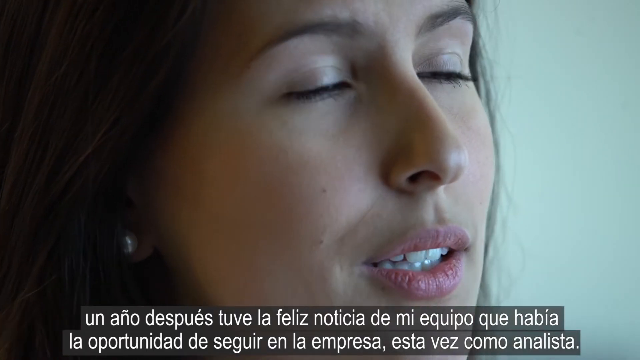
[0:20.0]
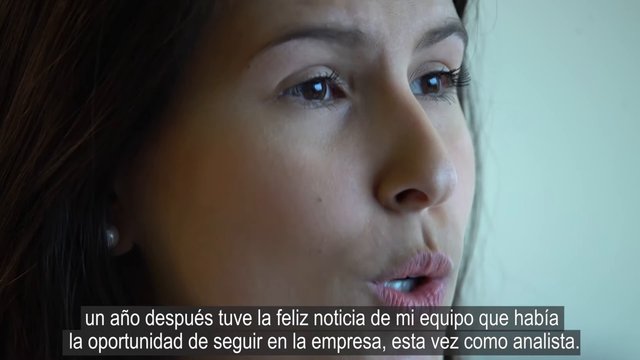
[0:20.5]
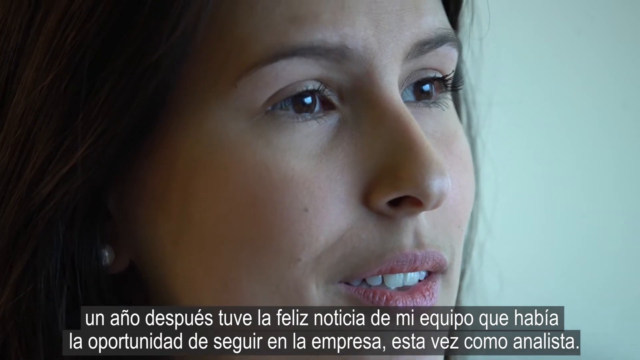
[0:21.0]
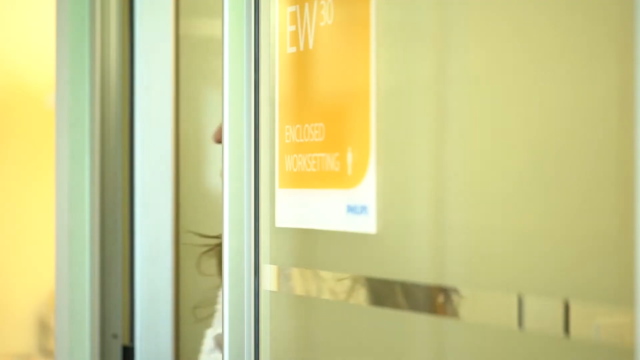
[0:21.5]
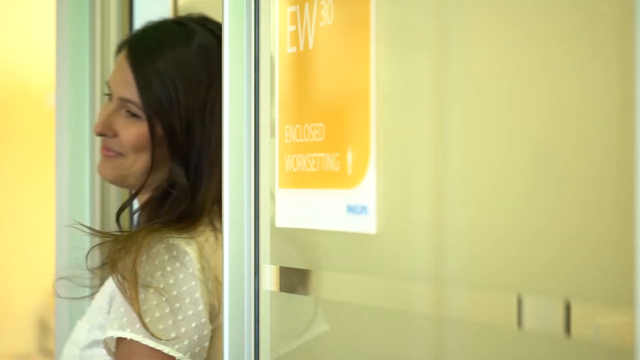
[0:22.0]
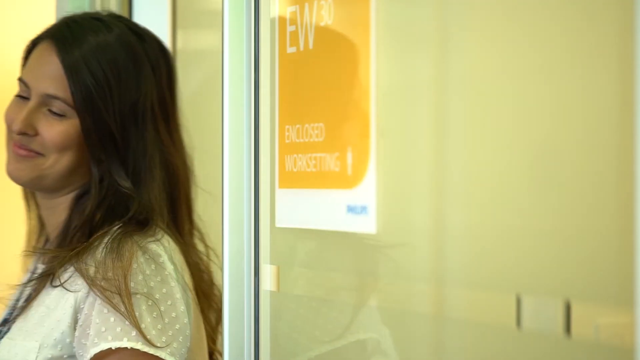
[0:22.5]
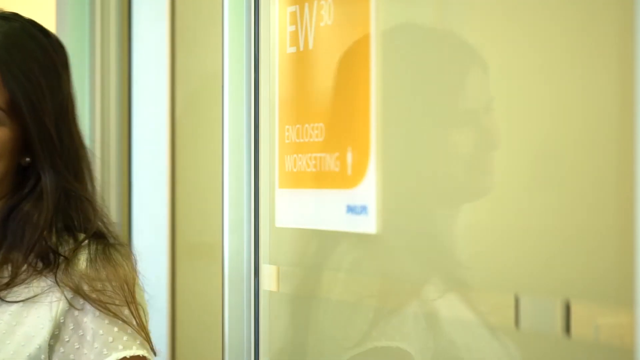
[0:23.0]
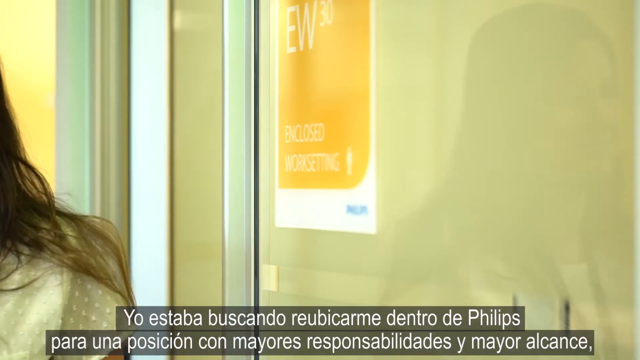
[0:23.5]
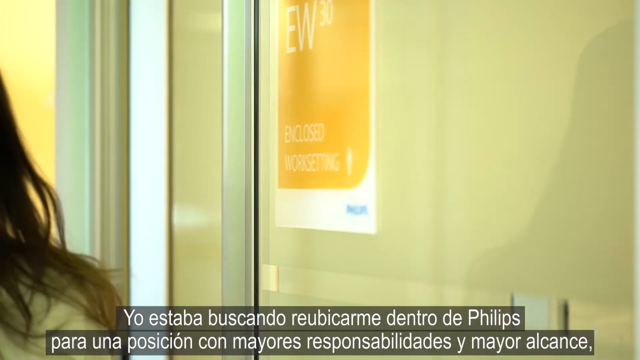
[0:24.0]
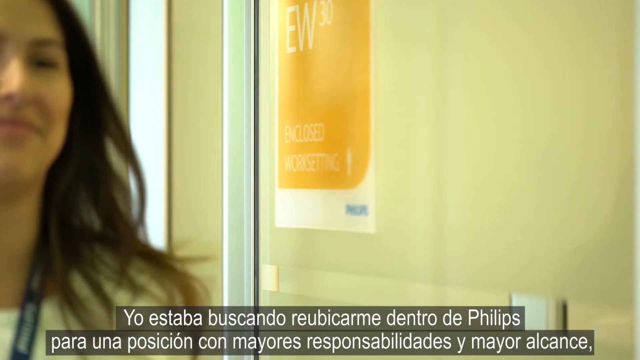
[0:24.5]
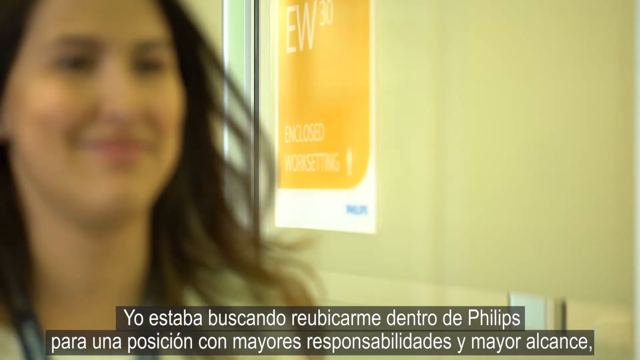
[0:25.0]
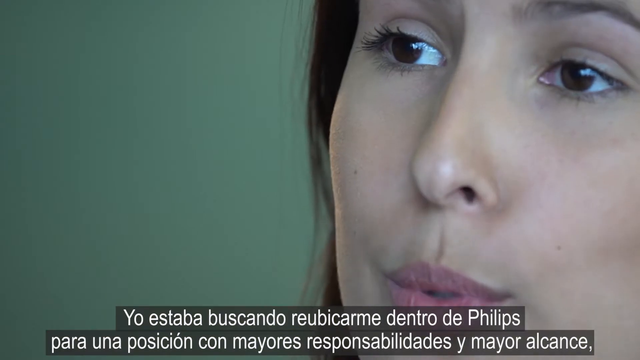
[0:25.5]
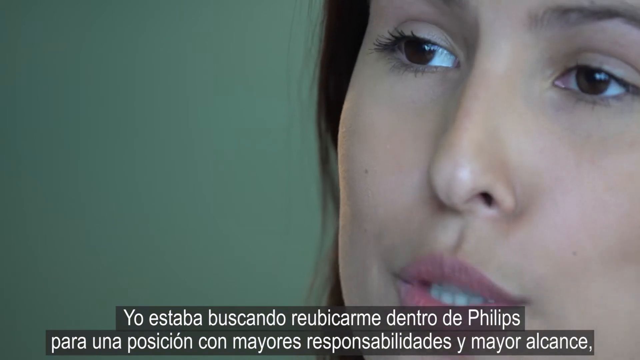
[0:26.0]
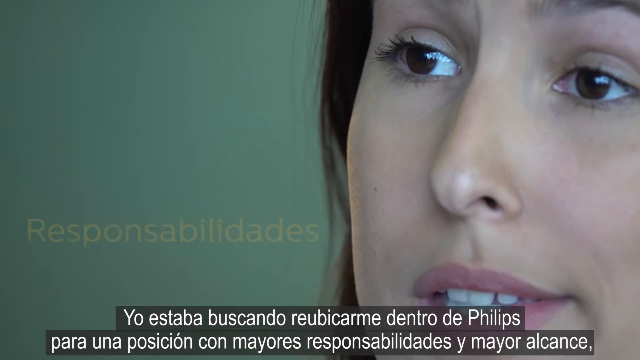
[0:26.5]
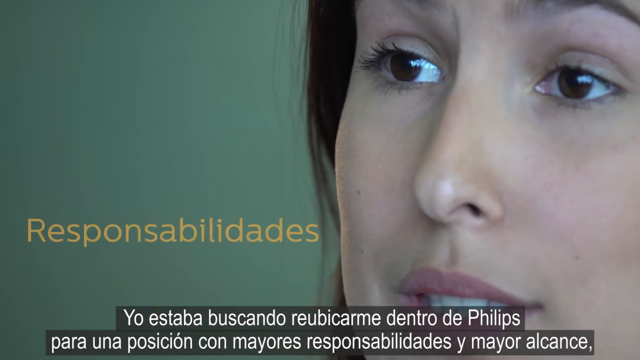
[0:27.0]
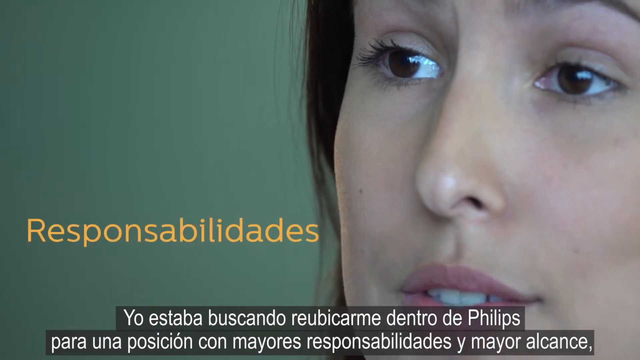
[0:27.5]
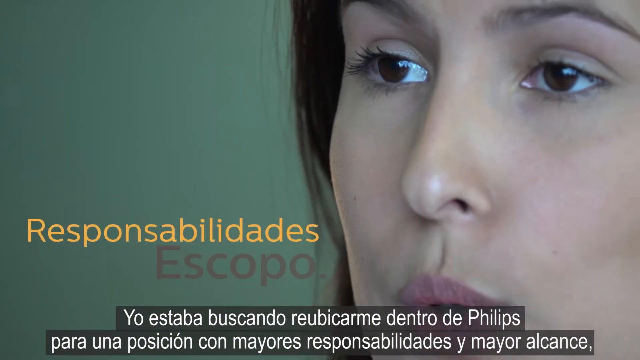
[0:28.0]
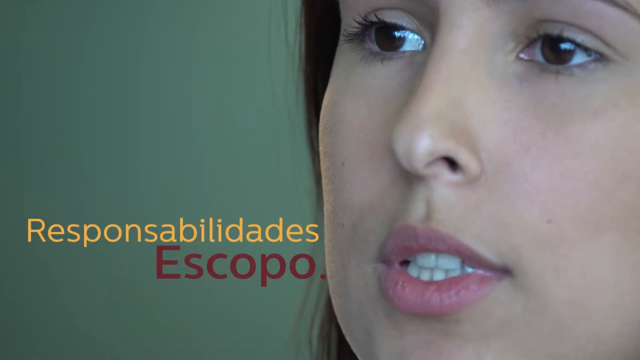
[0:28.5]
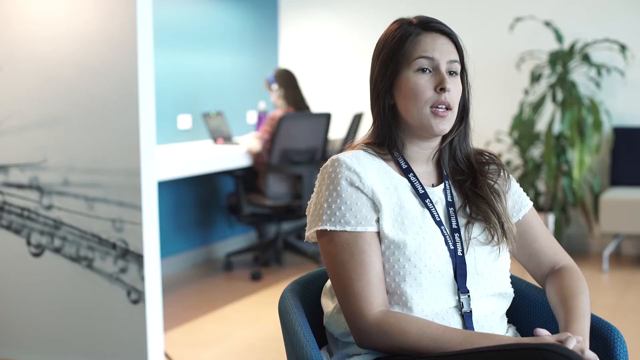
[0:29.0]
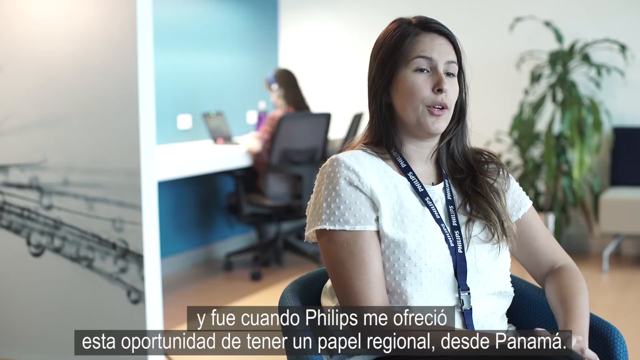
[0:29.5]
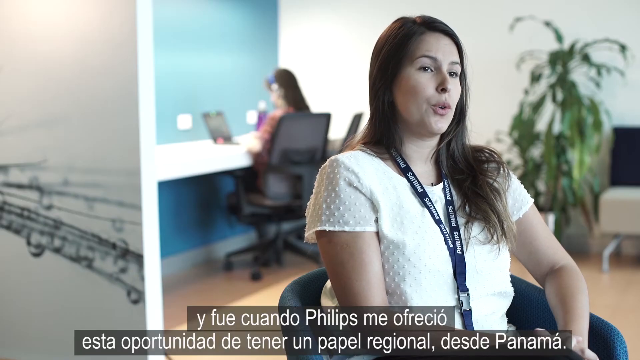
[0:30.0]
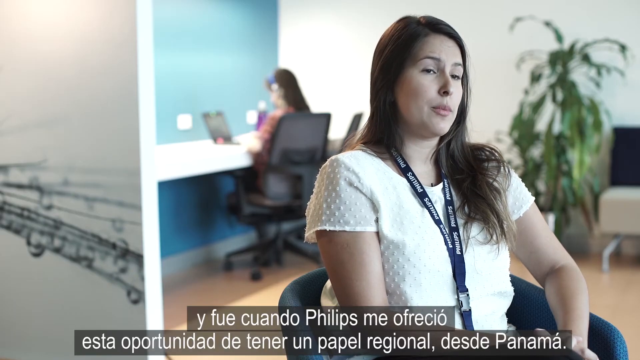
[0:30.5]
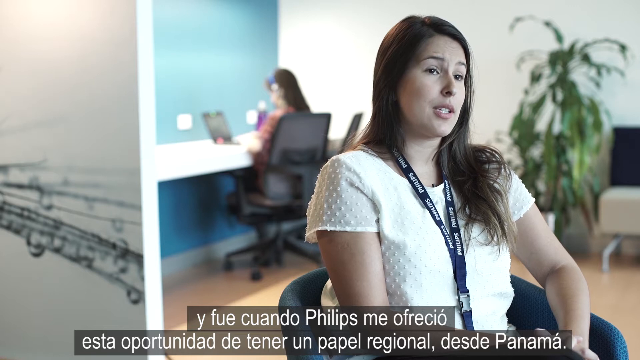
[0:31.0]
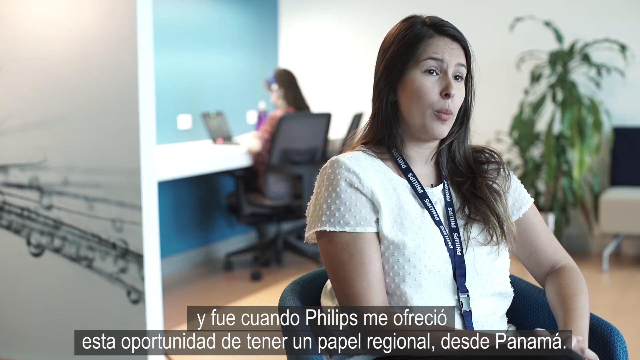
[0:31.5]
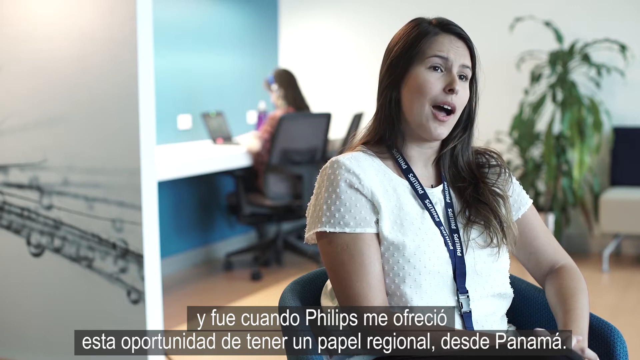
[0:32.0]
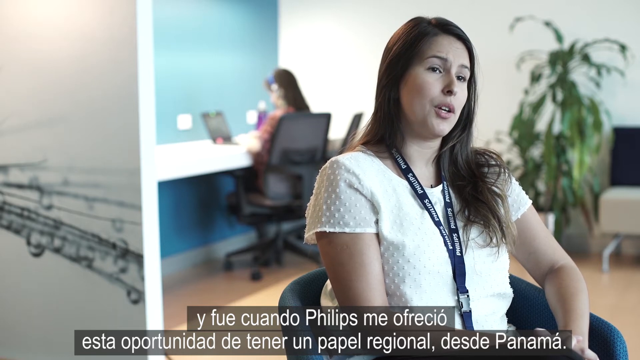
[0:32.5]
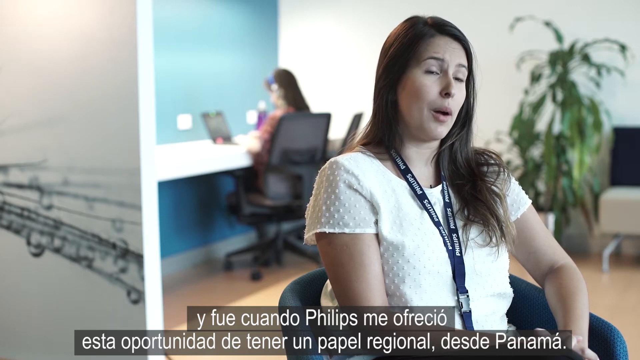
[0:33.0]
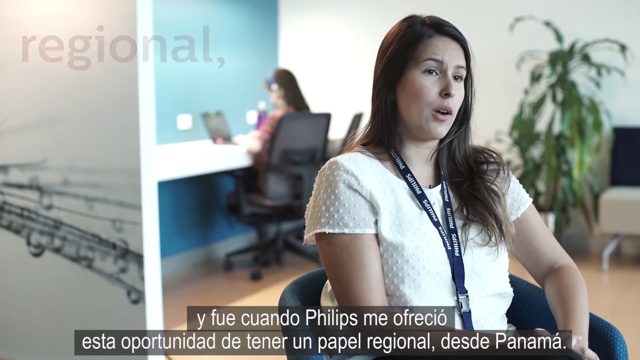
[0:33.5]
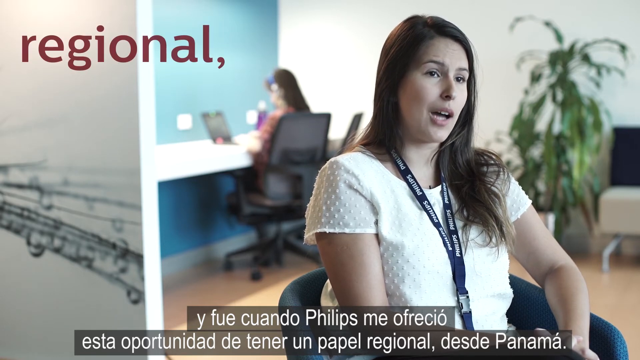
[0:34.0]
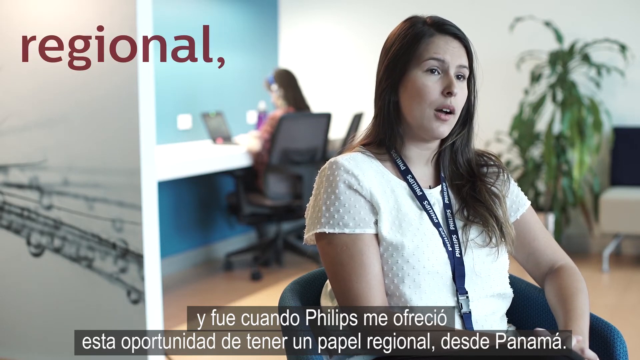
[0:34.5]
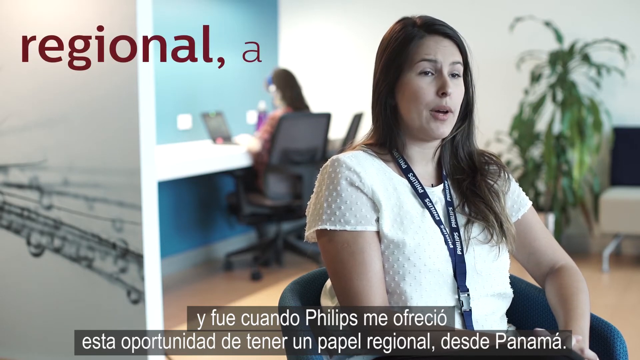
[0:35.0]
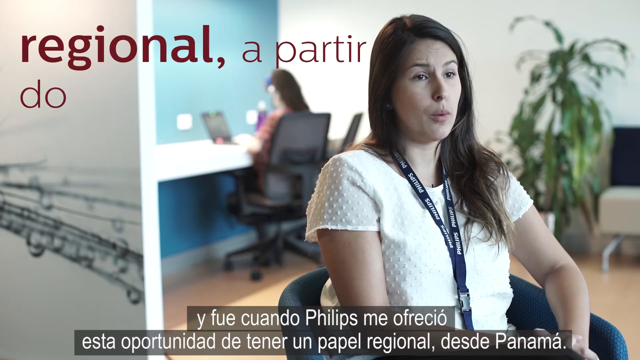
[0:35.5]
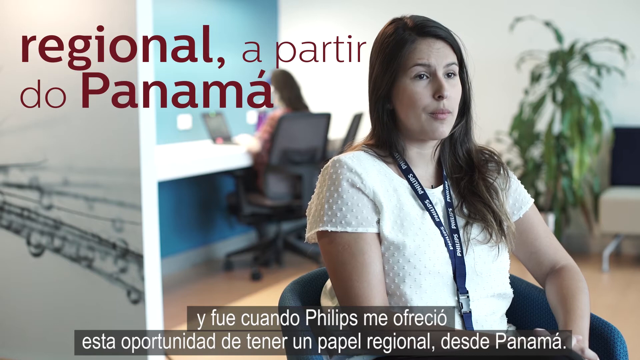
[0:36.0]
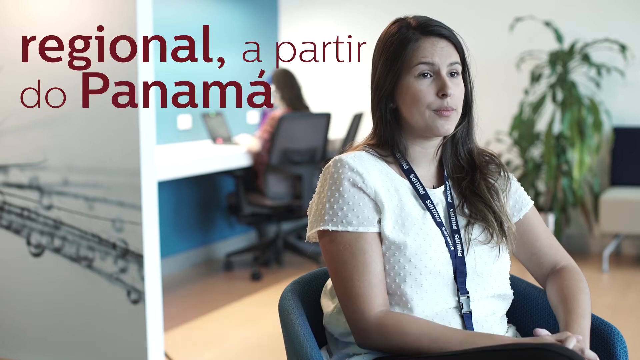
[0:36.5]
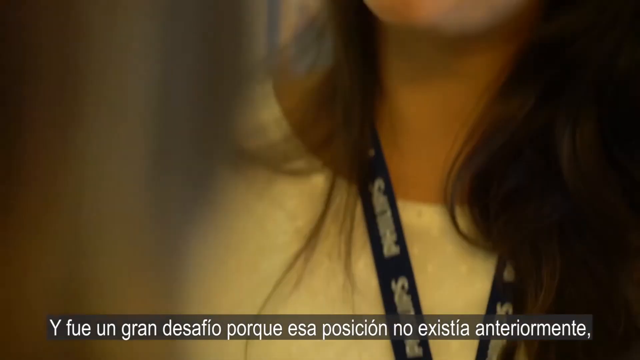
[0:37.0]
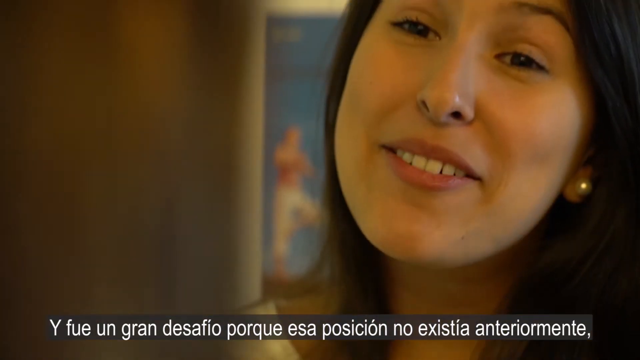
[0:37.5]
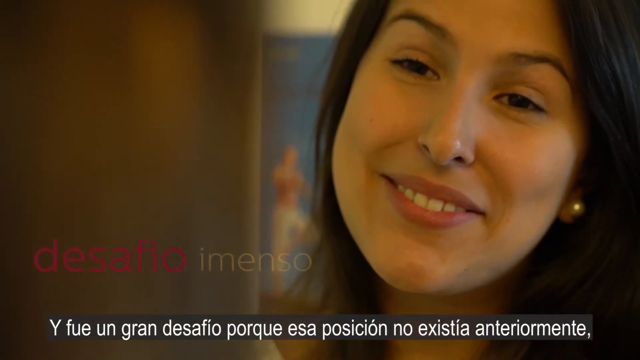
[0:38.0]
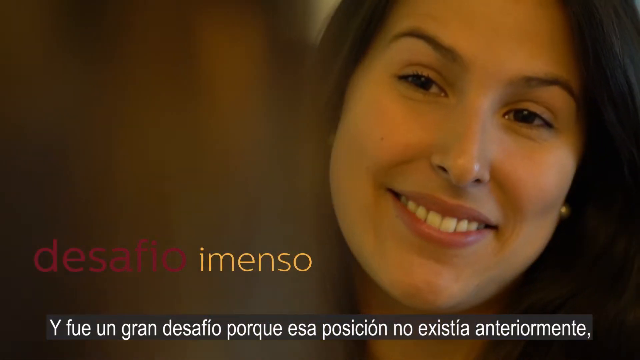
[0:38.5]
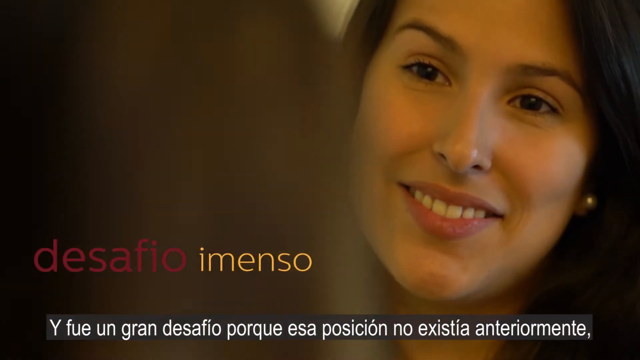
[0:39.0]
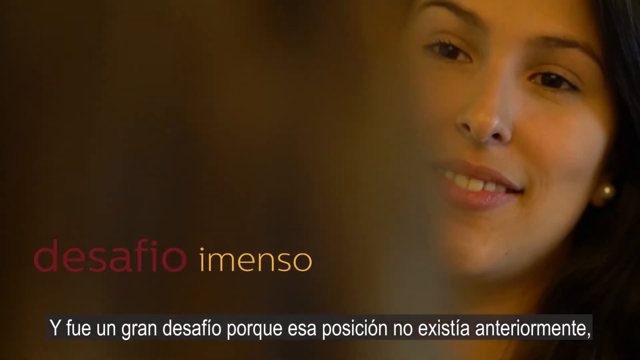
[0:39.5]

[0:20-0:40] Anna walks through yellow glass doors with a yellow and white sign attached, coming toward the camera with a small closed-lipped smile. The shot changes to a close, zoomed-in view of her face from her left side; her lips curl and her eyebrows lift as she speaks in another language. The words "Responsabilidades", written in yellow, and "Escopo", written in red, appear on the screen. The video returns to the office, where Anna speaks as she sits in her chair in front of the woman working on a laptop in an office chair, in front of a blue wall and a white countertop. Anna then speaks to another woman who is standing; only the back of this woman's head and hair is visible. The camera pans quickly to the front of that woman's face.